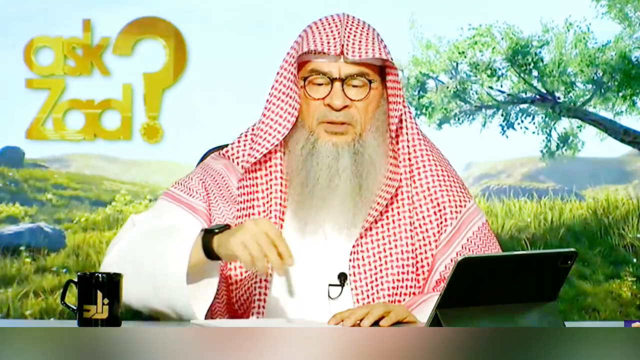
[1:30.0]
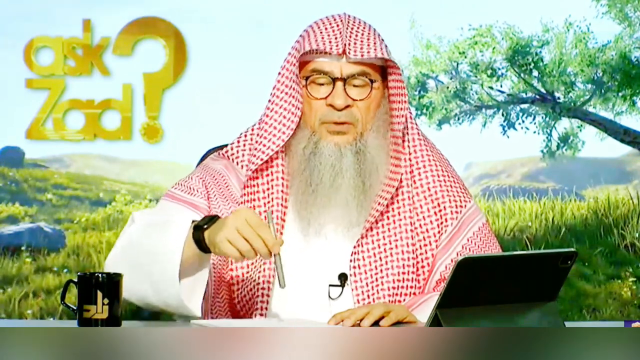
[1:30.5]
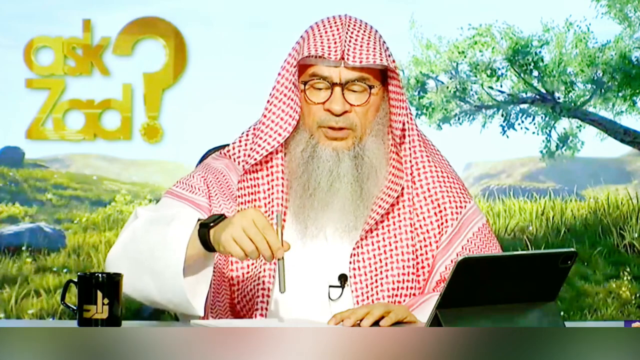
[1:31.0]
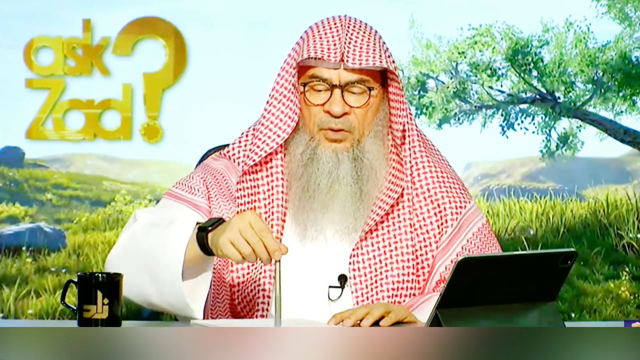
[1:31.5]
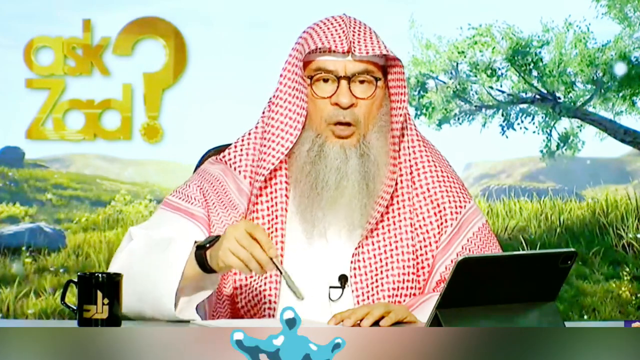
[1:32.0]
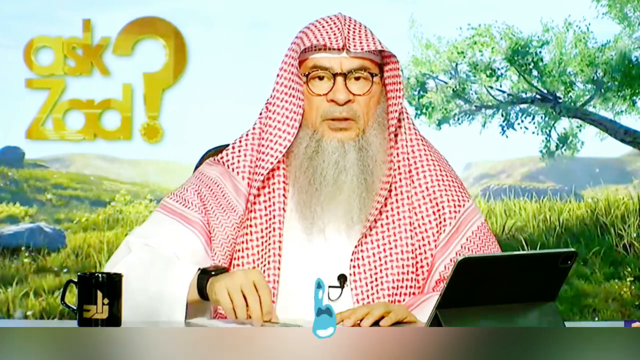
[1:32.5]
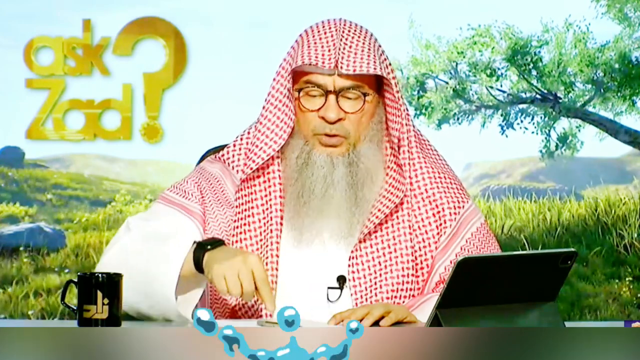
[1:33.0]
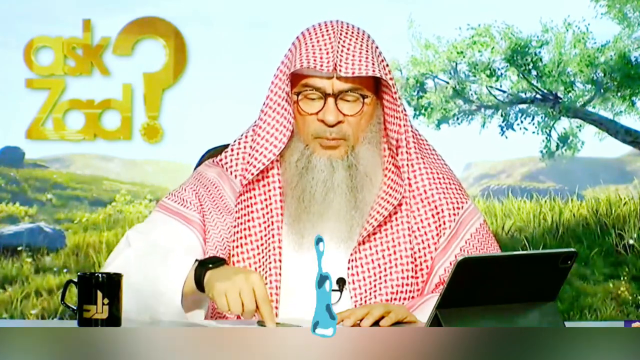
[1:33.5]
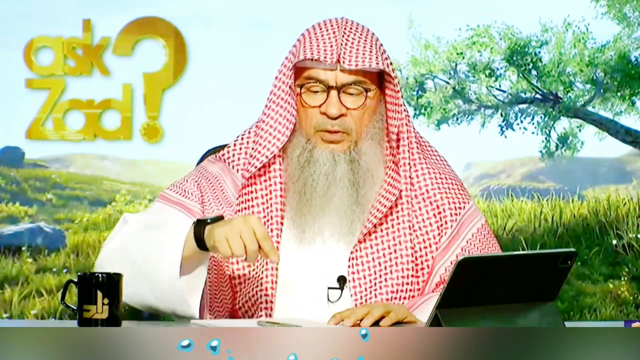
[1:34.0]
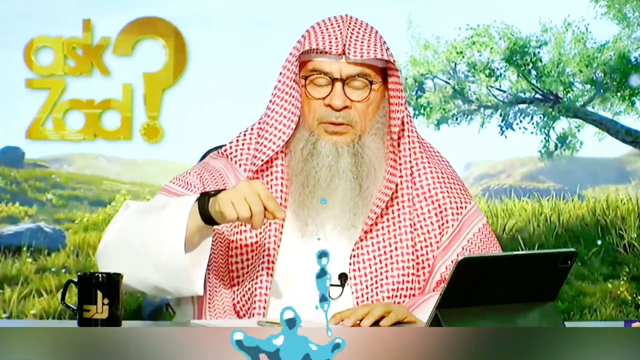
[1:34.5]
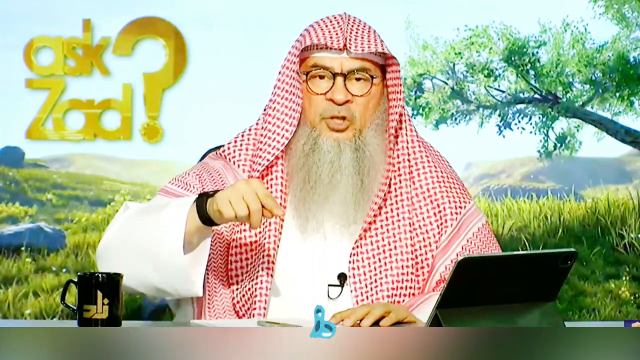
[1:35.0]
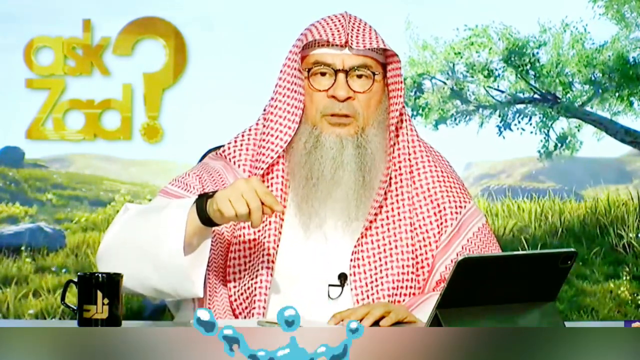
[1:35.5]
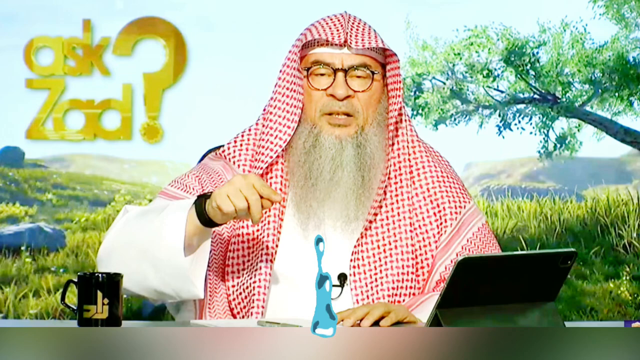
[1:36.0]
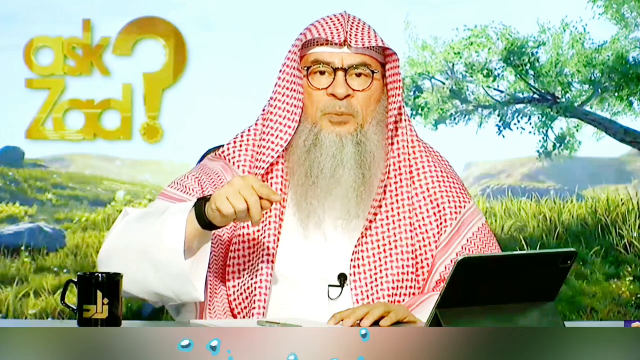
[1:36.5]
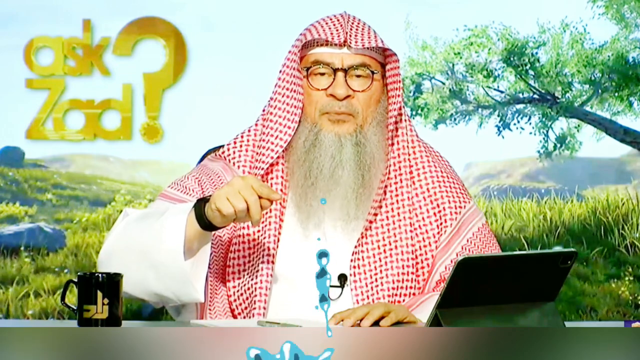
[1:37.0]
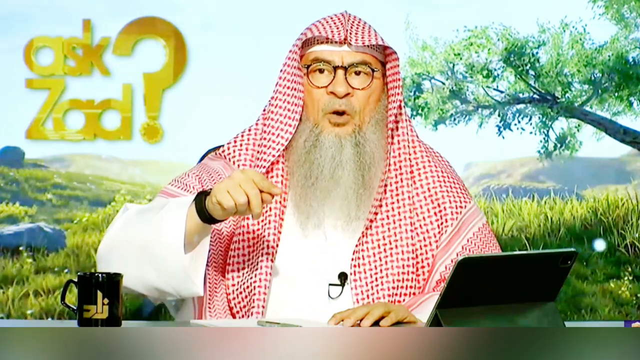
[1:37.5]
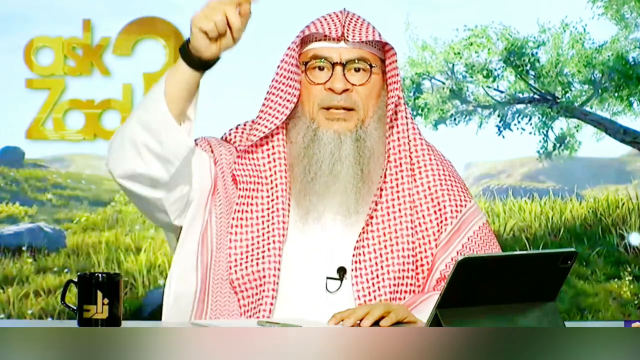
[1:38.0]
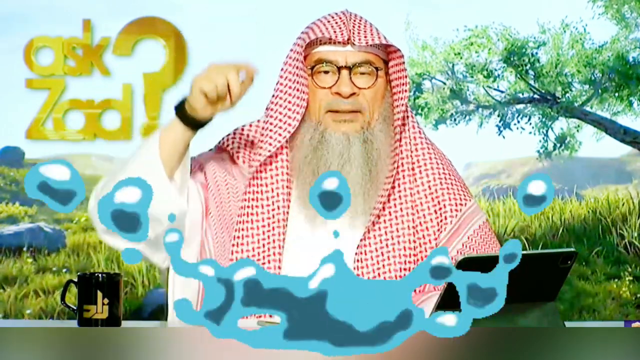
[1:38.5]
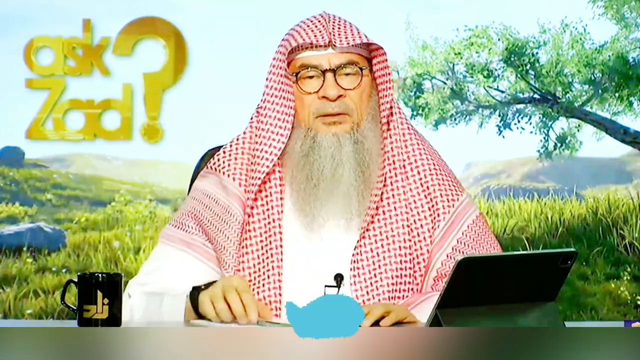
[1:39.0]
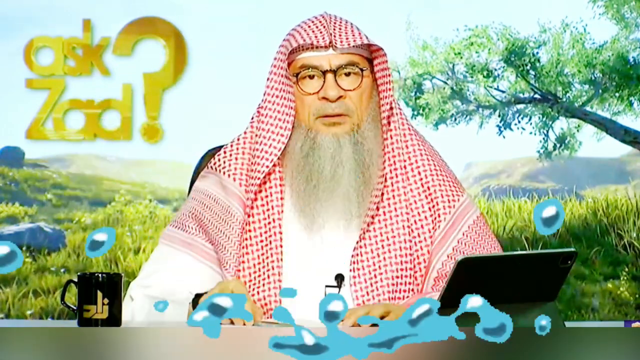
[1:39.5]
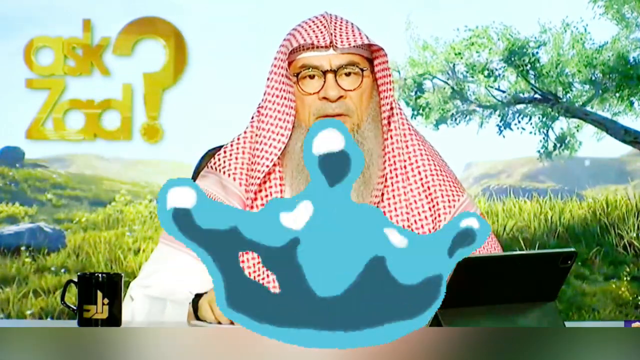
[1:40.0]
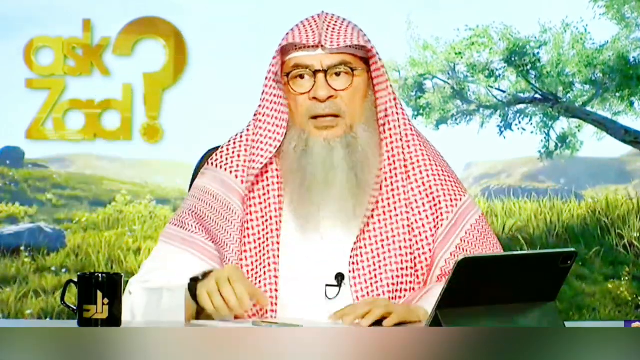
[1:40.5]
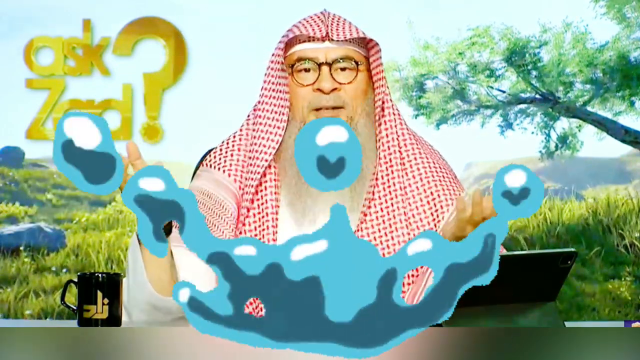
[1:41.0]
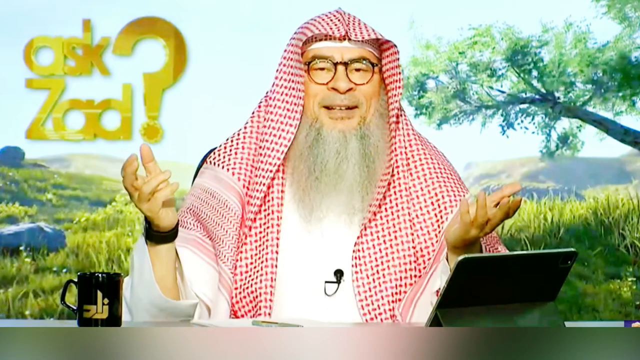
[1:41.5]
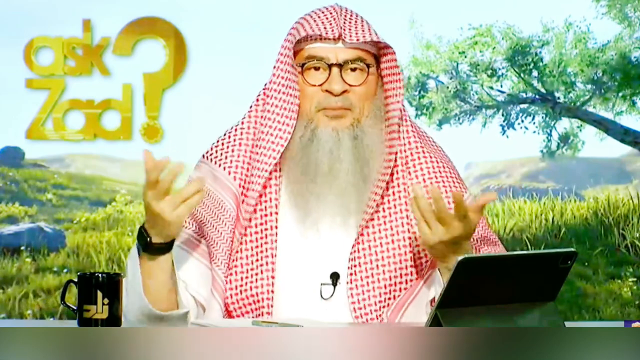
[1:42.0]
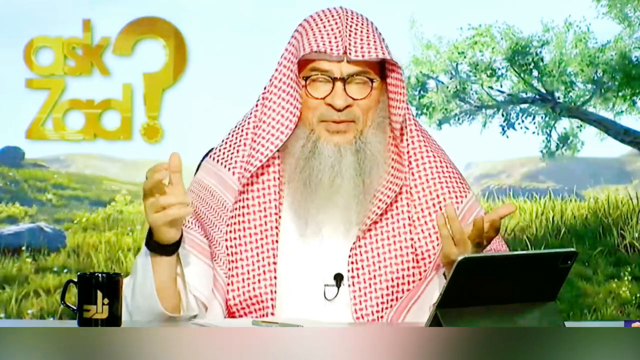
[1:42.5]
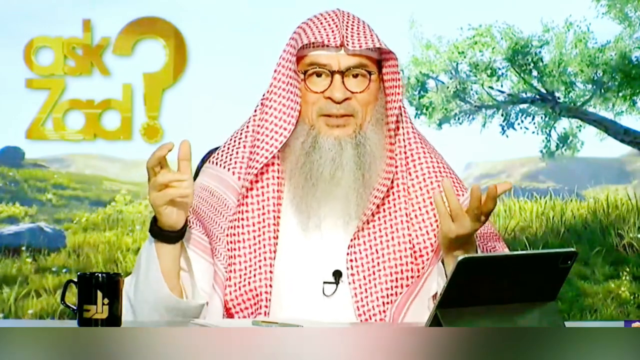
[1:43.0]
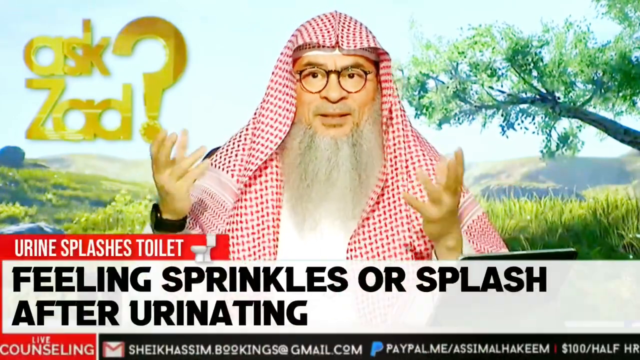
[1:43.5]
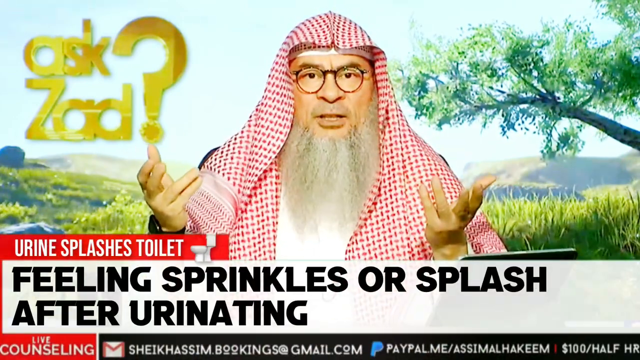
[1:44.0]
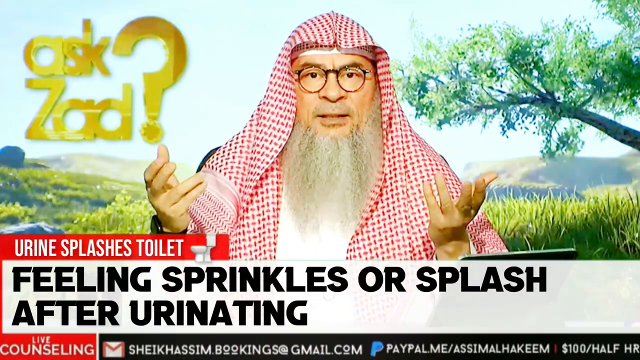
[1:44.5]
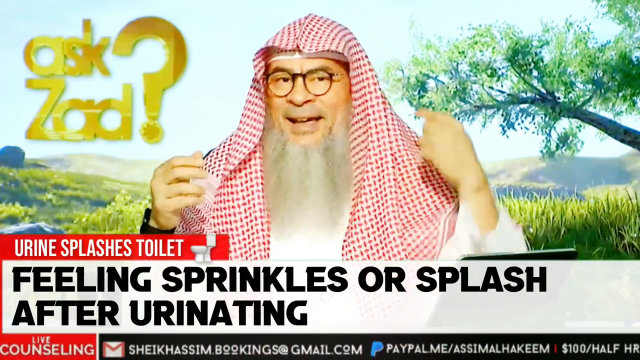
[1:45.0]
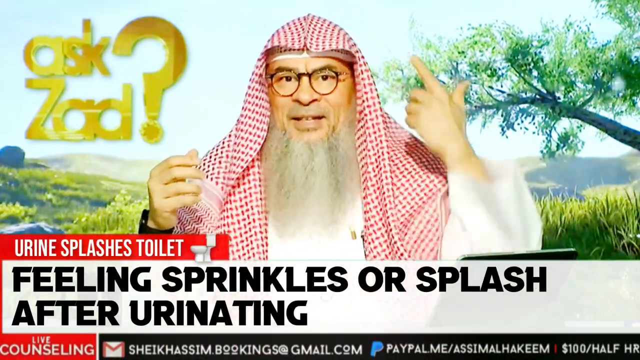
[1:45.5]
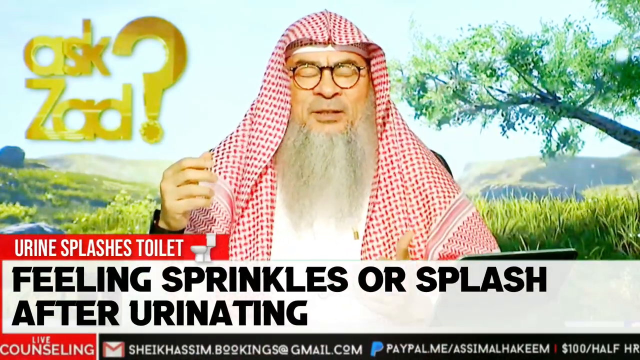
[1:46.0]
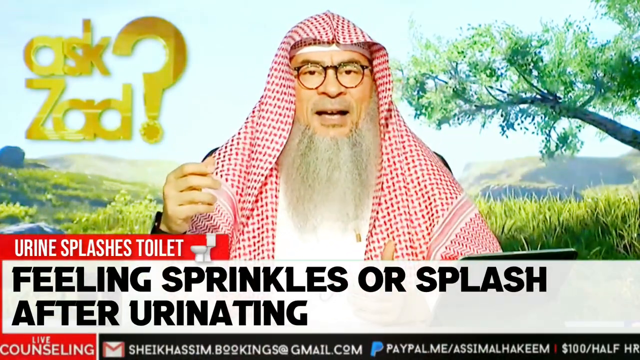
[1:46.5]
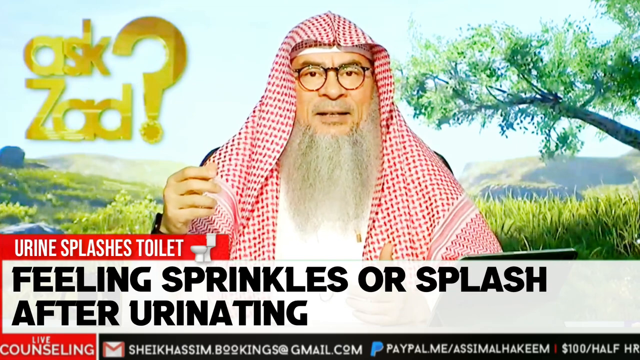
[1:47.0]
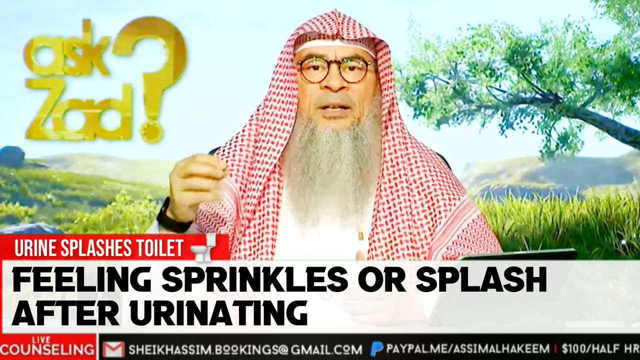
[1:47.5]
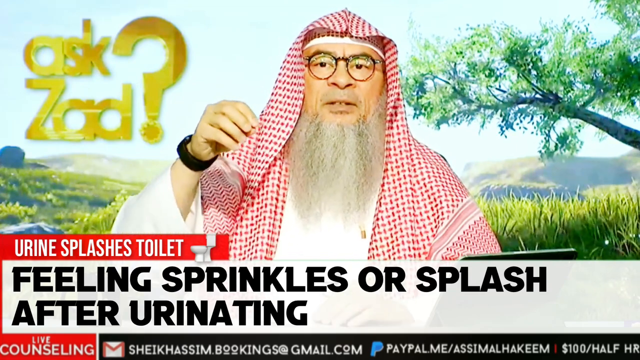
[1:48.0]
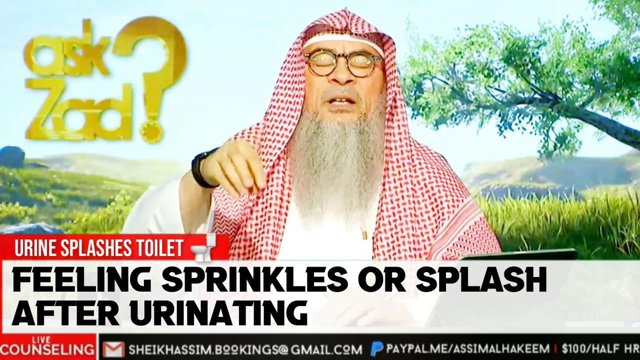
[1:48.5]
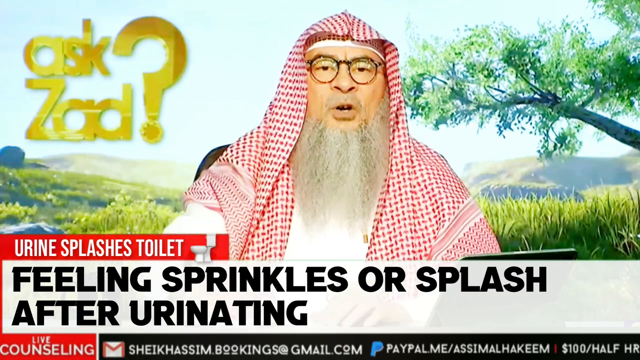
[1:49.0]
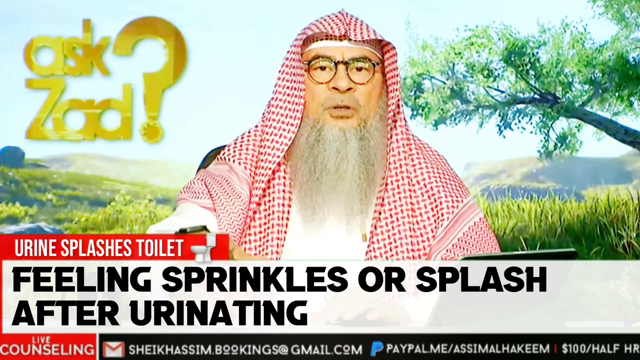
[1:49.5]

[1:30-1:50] As the Sheik talks, he sets the pen down, and an animated water splash rises from the center bottom of the screen, as if something is bubbling over. He motions with his right hand something that goes down and up. The splash gets very big, covering about half the screen. He is almost laughing or smirking. Both of his hands are up as he talks, with a sort of head shake as he tries to explain something. He points to the back of his head with a finger of his left hand and taps the fingers of his right hand on the desk. He appears to be making a strong point, but with a lighthearted expression, almost as if he wants to laugh.